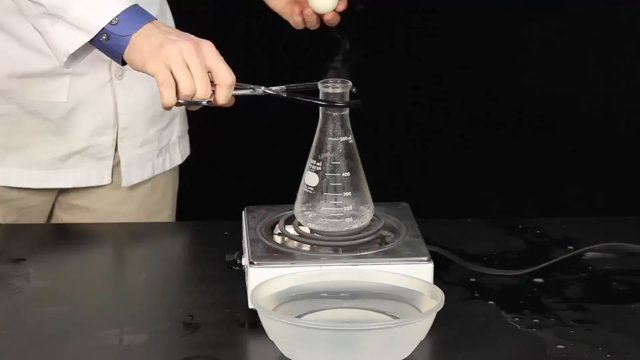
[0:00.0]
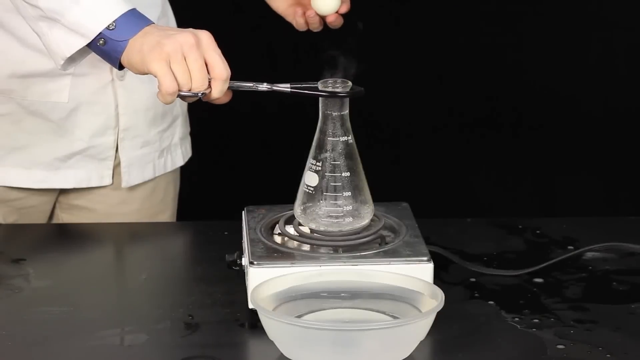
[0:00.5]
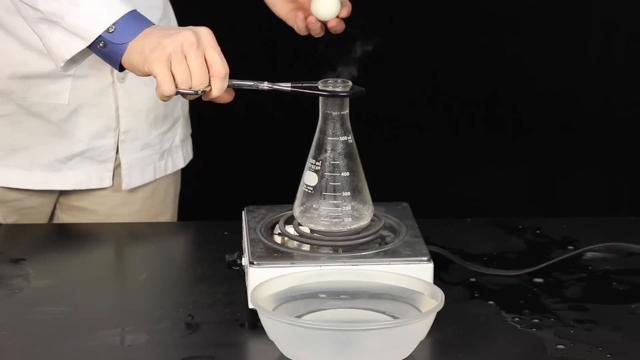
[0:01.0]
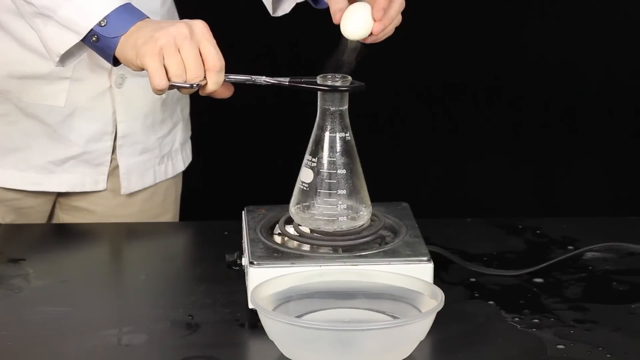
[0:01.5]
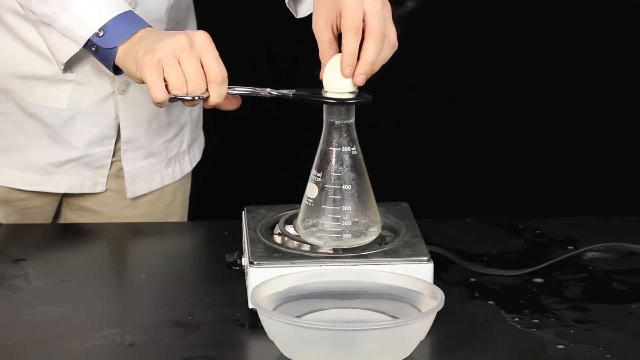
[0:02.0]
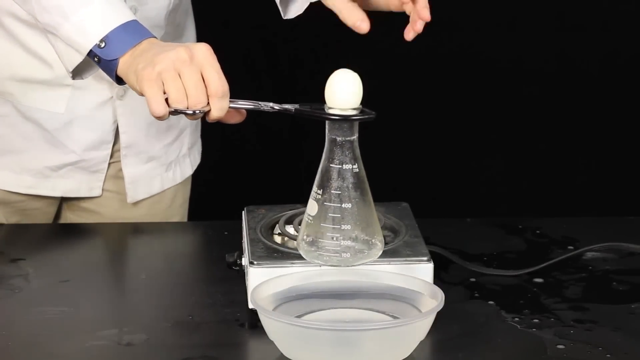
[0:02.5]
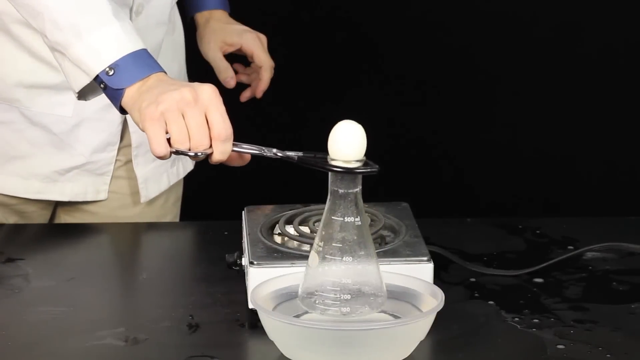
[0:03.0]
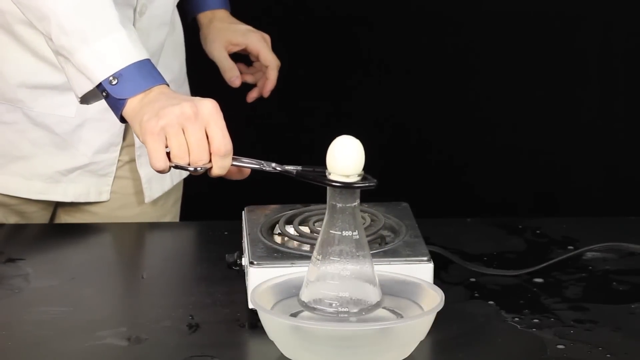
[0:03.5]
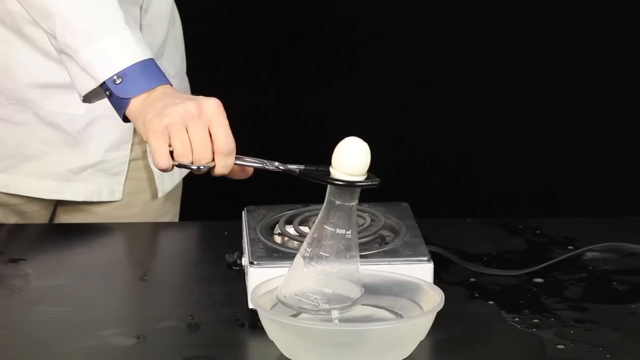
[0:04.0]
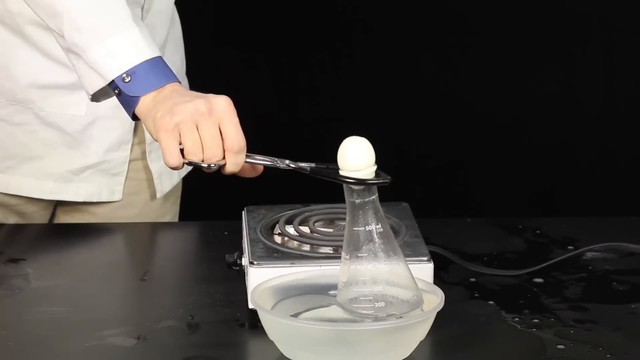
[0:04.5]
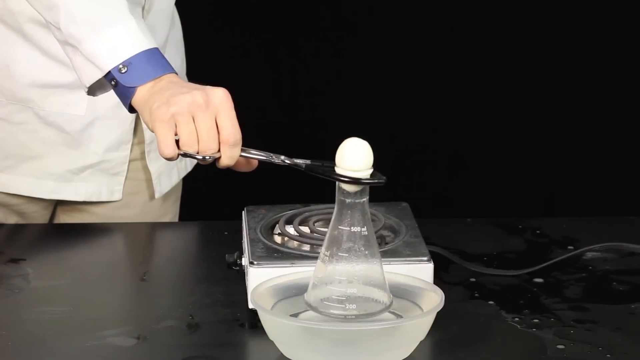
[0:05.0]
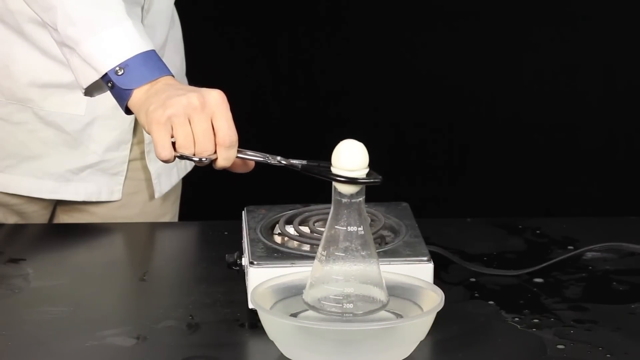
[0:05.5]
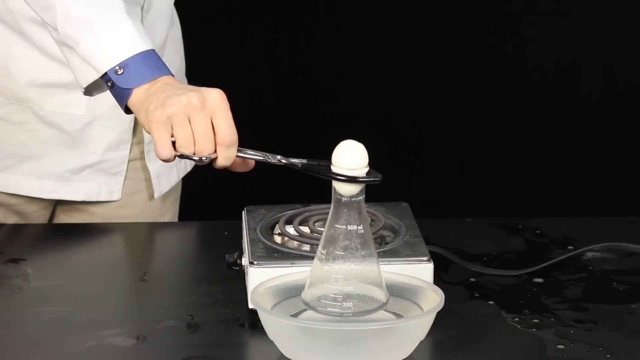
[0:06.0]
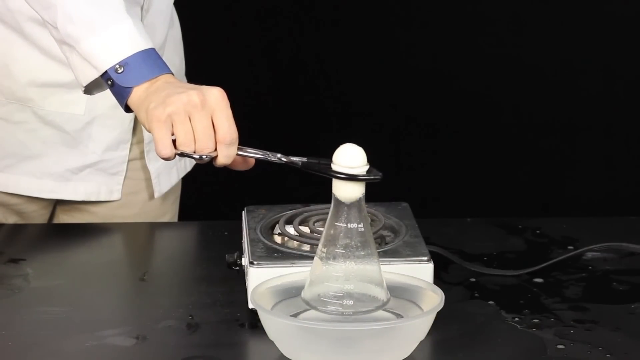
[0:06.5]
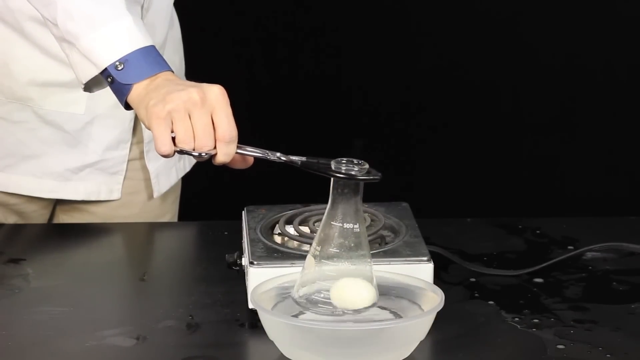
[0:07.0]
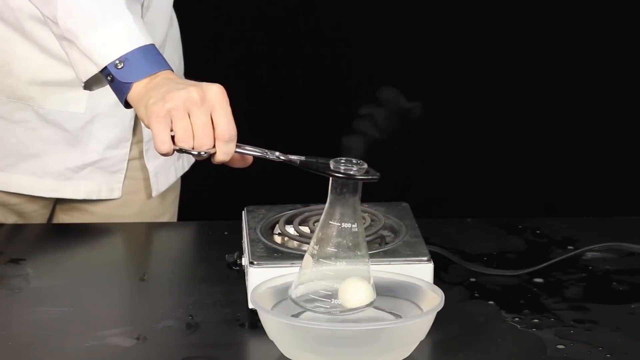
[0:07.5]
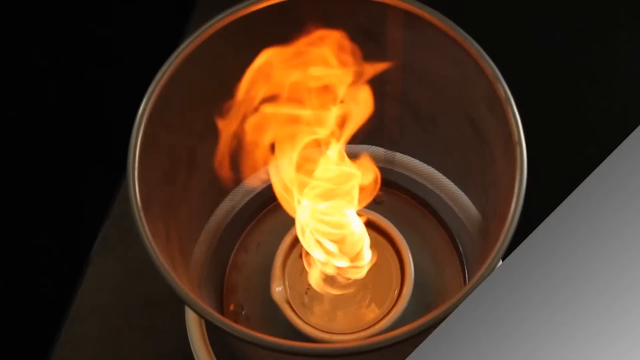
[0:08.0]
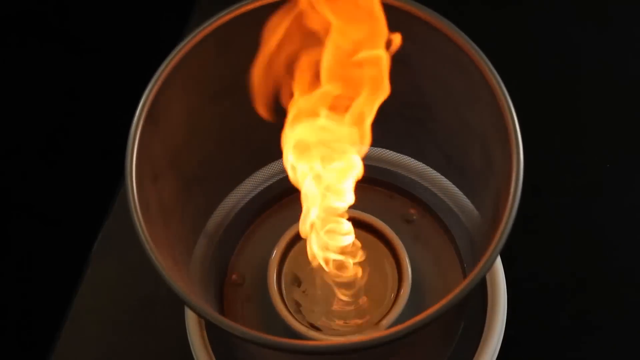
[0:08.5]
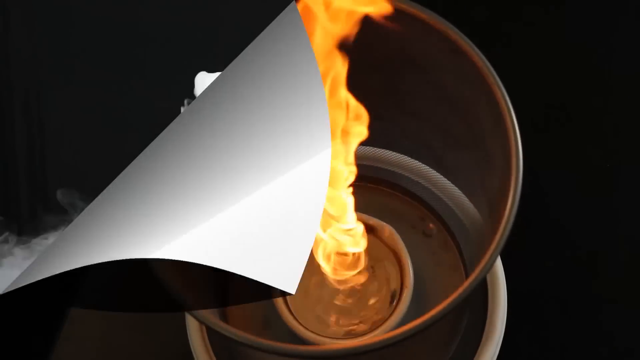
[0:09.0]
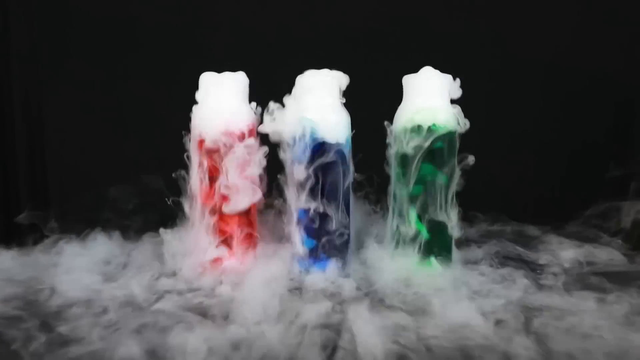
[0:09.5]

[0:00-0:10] A man is seen from the waist down, with his hands visible. He wears a white lab coat with a blue shirt visible underneath and khaki pants. In front of him is a clear beaker on a single burner. He holds the lab vessel with tongs in his right hand and has an egg in his left hand. Steam comes from the vessel. He places the egg on top of the glass and then sets the bottom of the glass in a pan of water next to him. Eventually the egg slips through the opening of the beaker. The scene quickly switches to a cyclone of fire inside a spinning copper-colored pot, then to three test tubes bubbling away with smoke and steam coming out of their tops. They are different colors: red on the left, blue in the middle, and green on the right.